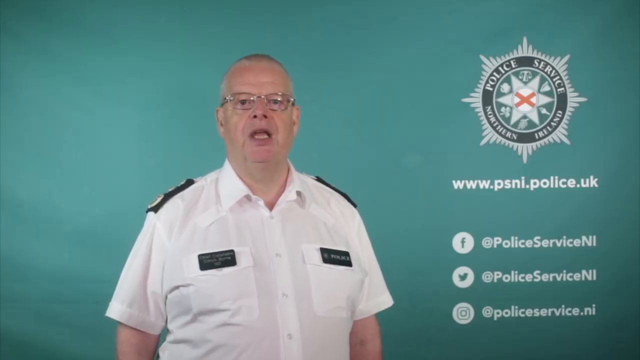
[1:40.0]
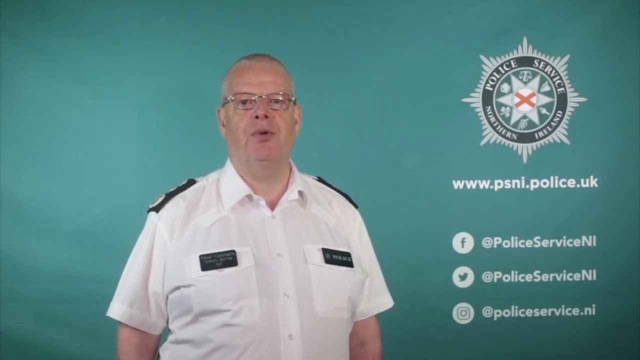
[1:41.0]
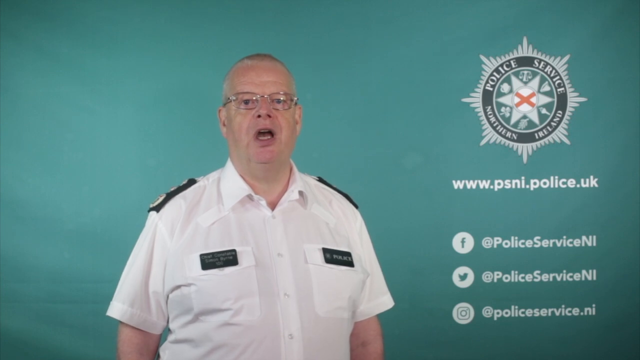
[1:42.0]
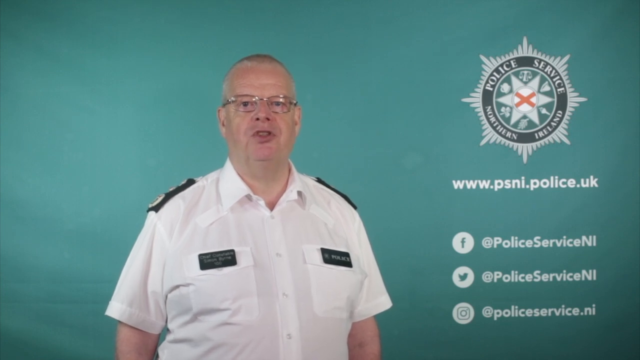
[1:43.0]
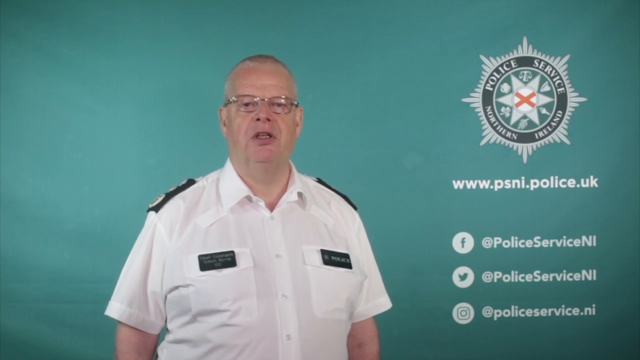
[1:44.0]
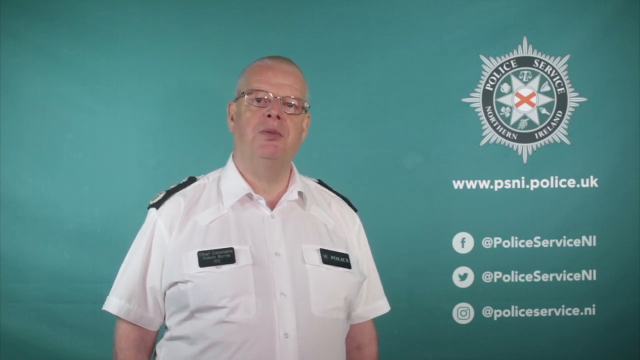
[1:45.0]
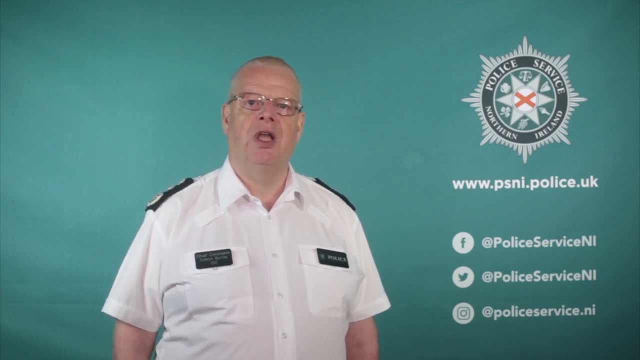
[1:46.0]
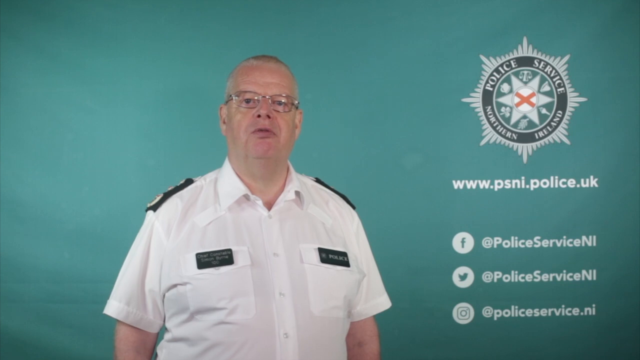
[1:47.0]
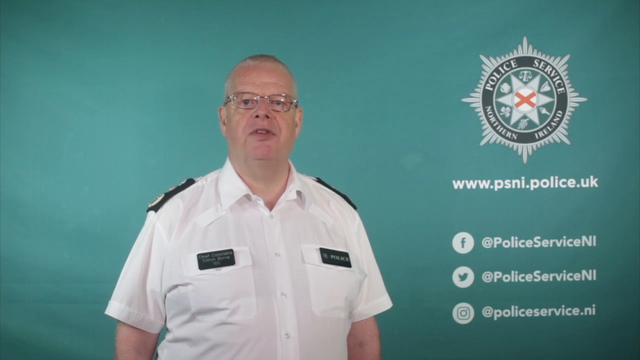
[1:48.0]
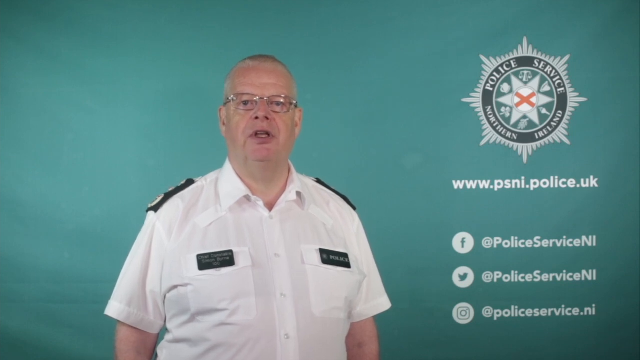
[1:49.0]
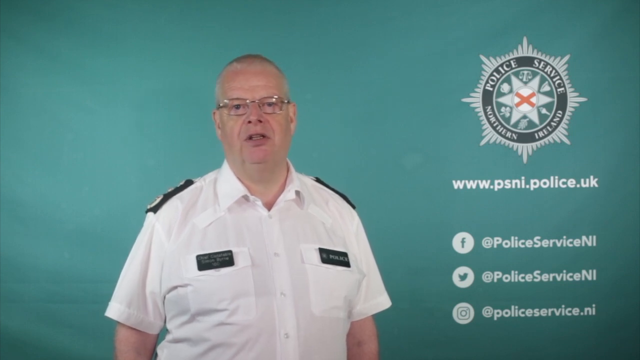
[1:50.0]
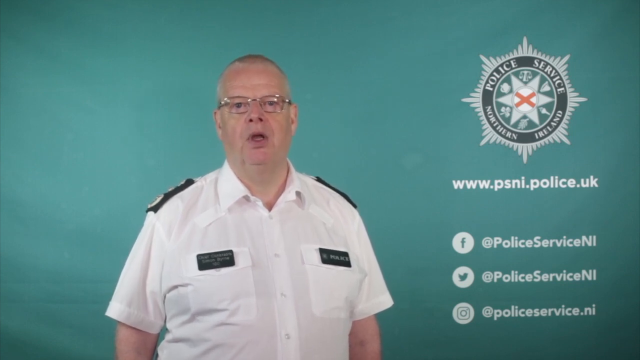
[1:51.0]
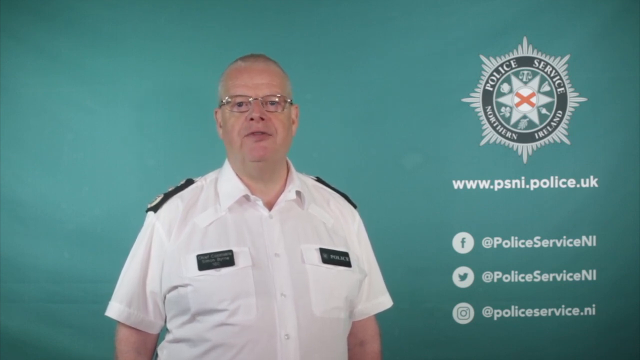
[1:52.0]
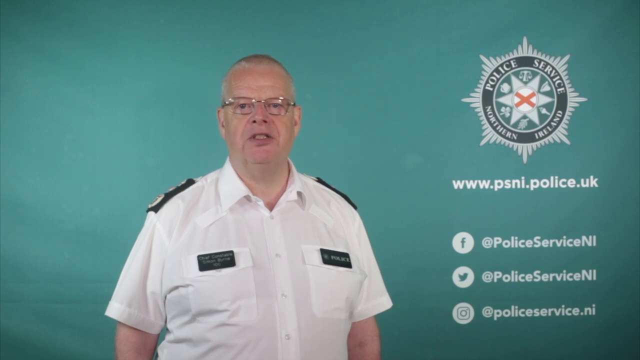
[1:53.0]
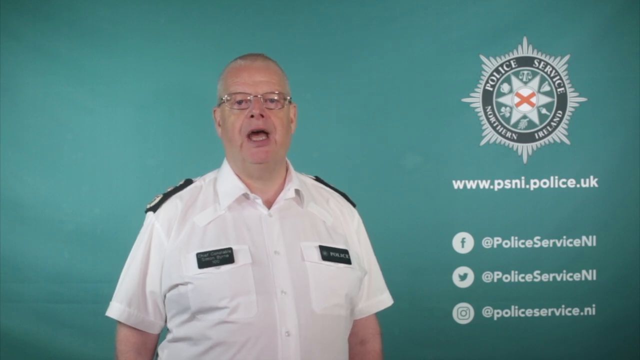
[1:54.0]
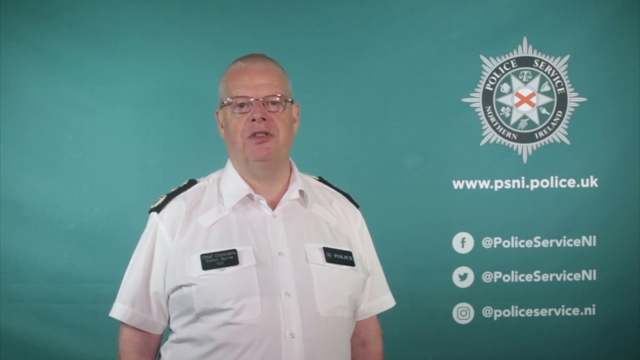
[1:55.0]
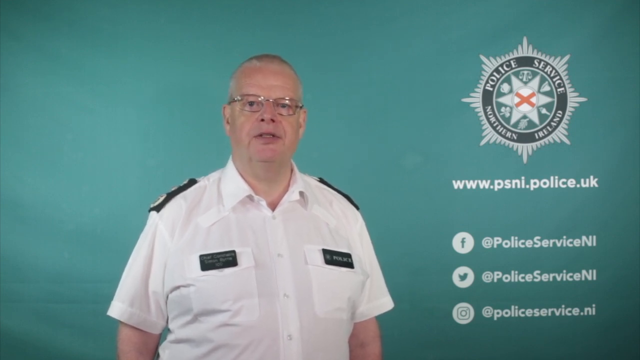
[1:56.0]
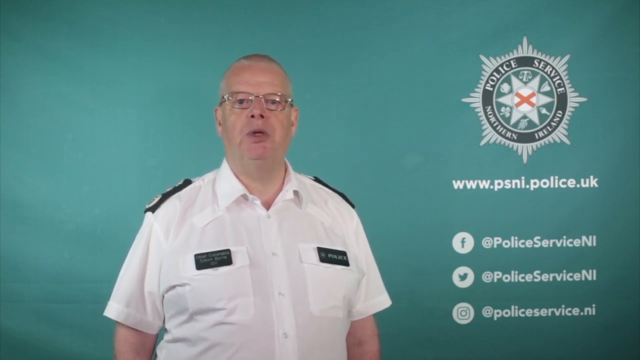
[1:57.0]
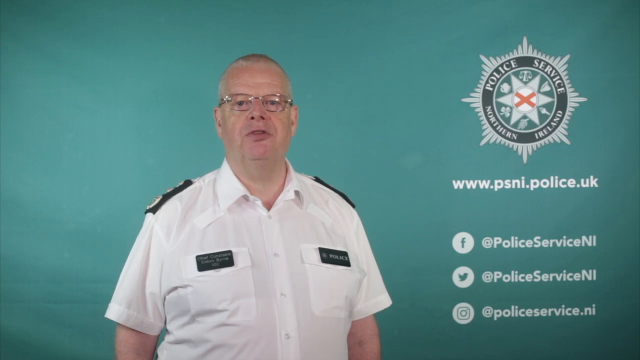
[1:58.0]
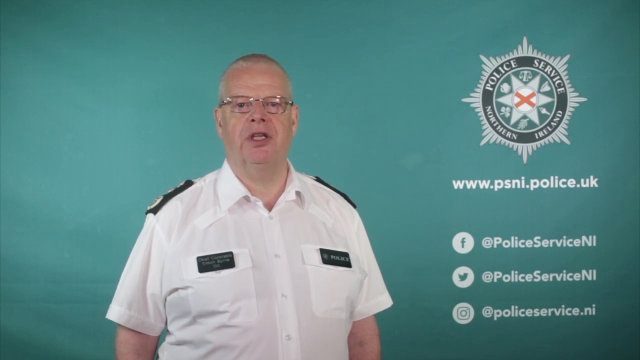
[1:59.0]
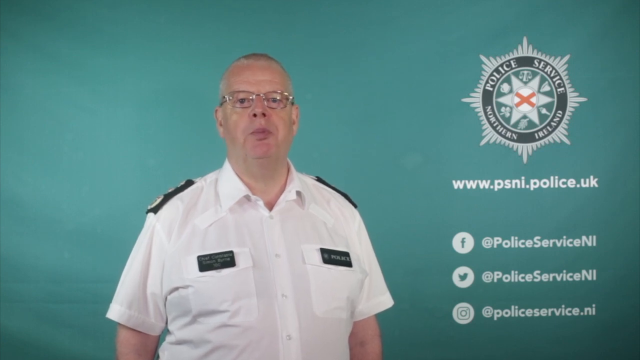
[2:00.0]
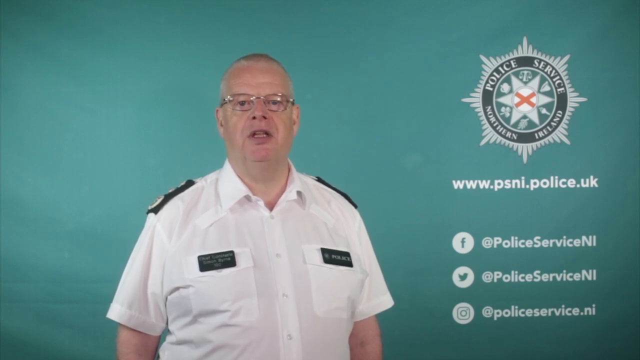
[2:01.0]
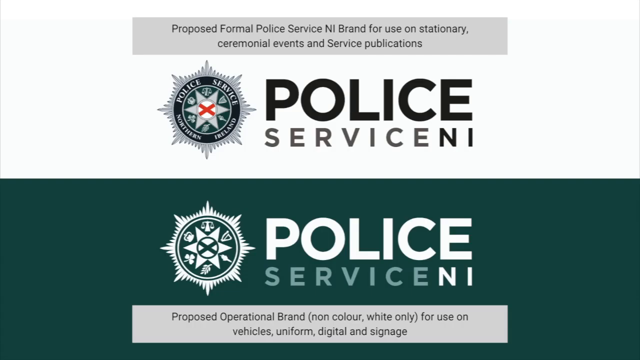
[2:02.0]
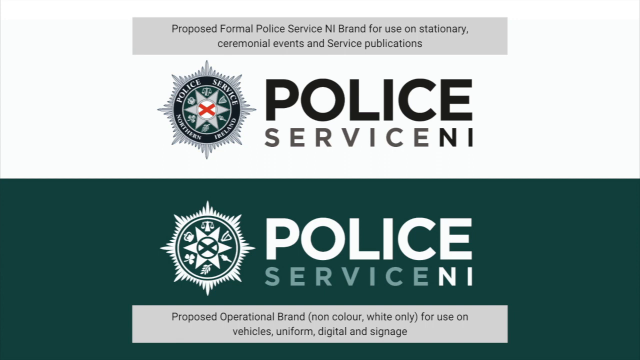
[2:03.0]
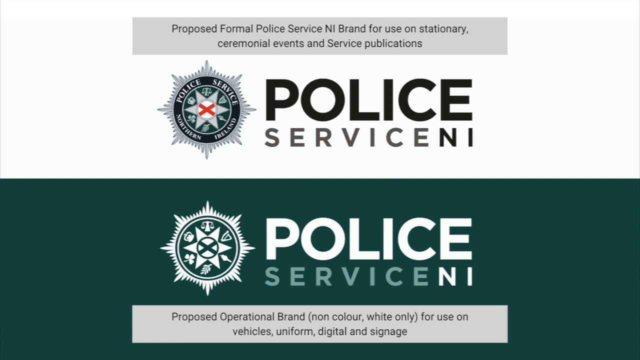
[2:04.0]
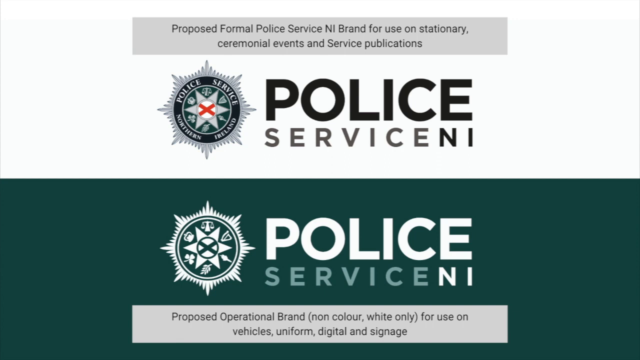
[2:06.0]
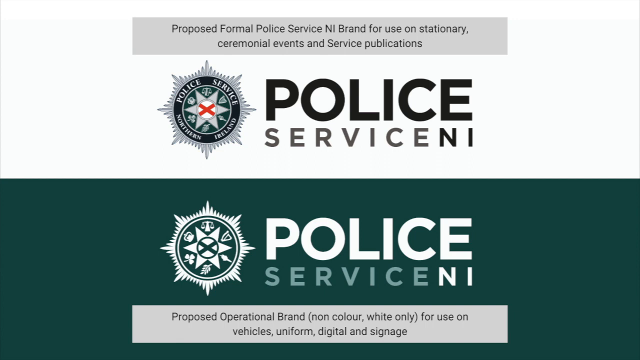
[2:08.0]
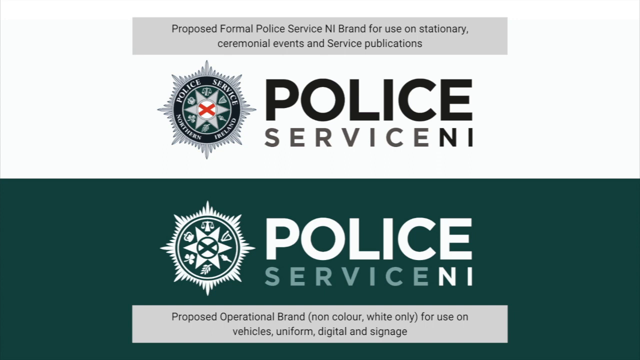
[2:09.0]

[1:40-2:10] The Chief Constable continues talking with slightly more noticeable movements; his mouth is a lot more expressive, though his facial expression is still rather dull with a hint of disappointment in his eyes. He stands in front of the greenish-blue background with the insignia on the right of the screen and the website and social media handles also on the right. After a while the screen changes to a picture showing a proposed branding image with the insignia and words reading police service NI. There is also a proposed operational brand with no colour, only white, to be used on vehicles, uniforms and signage, while the colour version of the design would be used on stationery, for ceremonial events and on service publications.